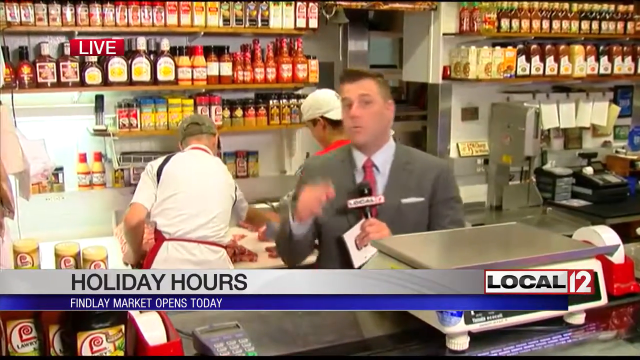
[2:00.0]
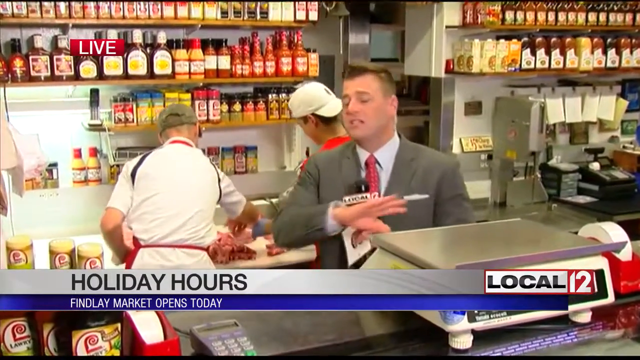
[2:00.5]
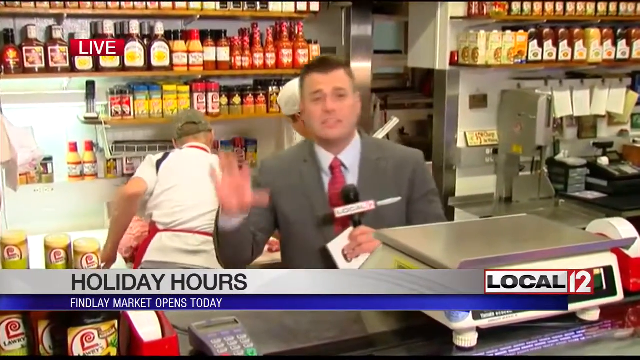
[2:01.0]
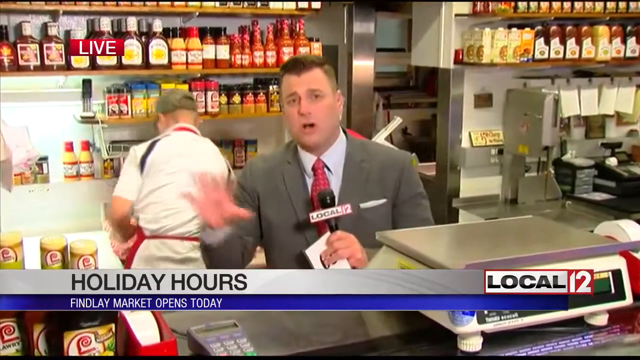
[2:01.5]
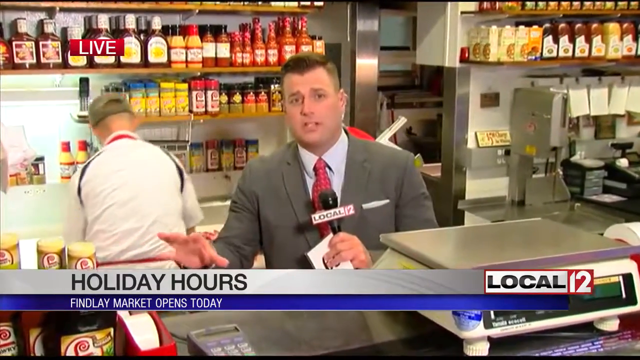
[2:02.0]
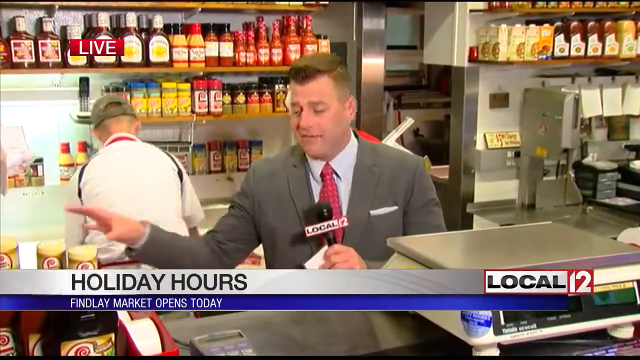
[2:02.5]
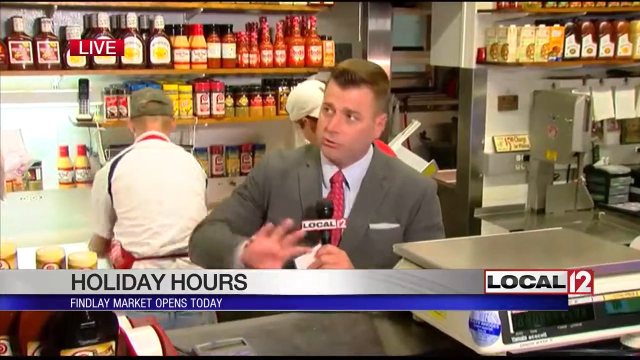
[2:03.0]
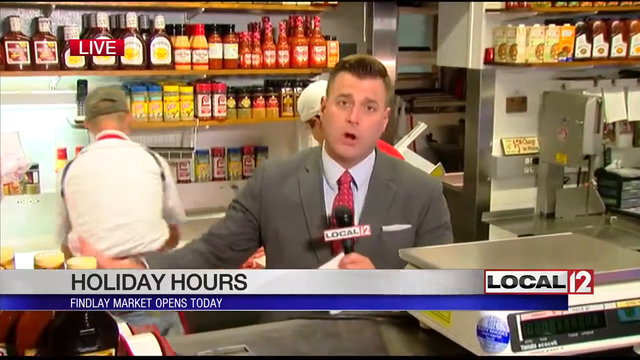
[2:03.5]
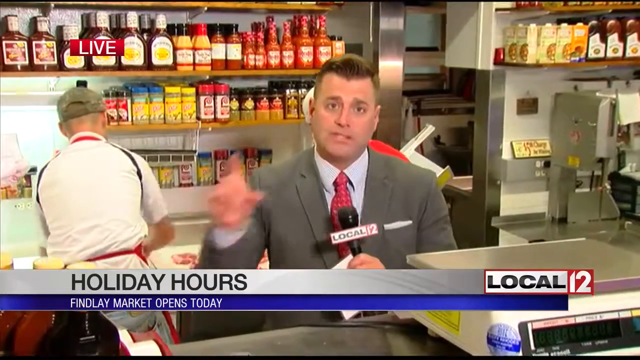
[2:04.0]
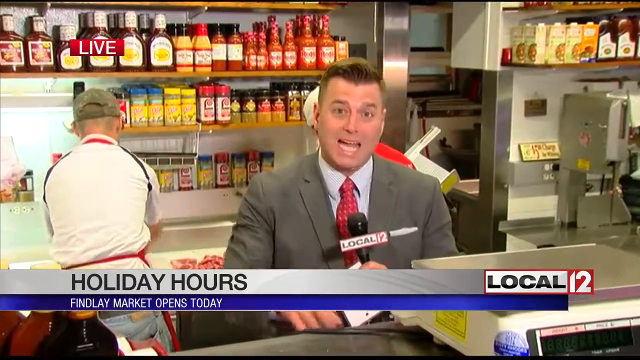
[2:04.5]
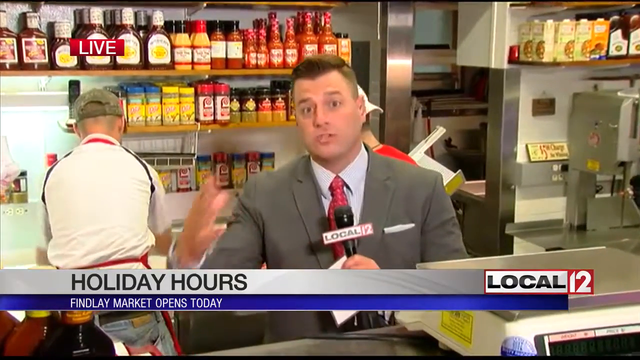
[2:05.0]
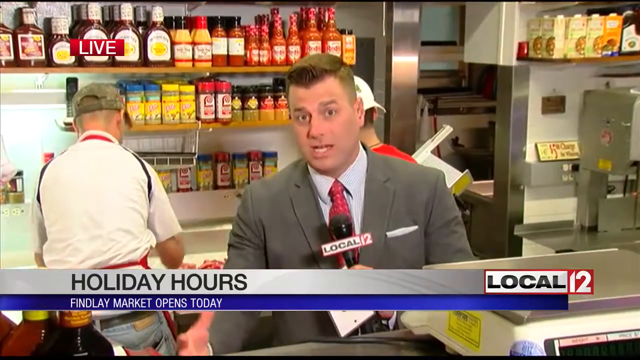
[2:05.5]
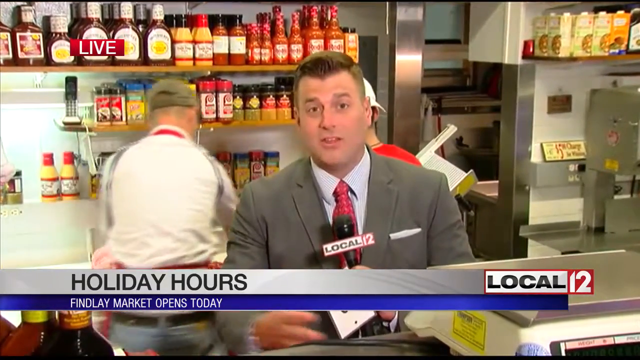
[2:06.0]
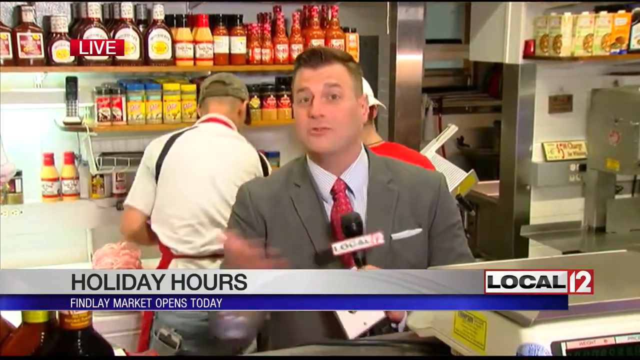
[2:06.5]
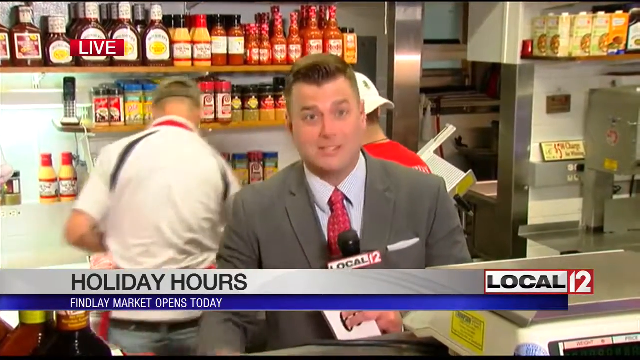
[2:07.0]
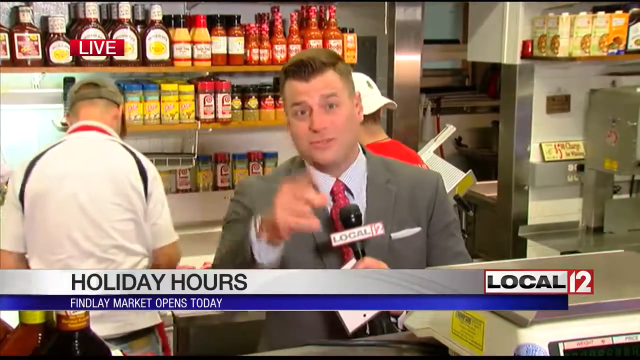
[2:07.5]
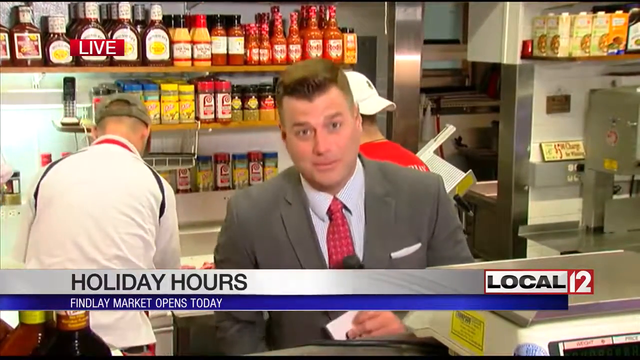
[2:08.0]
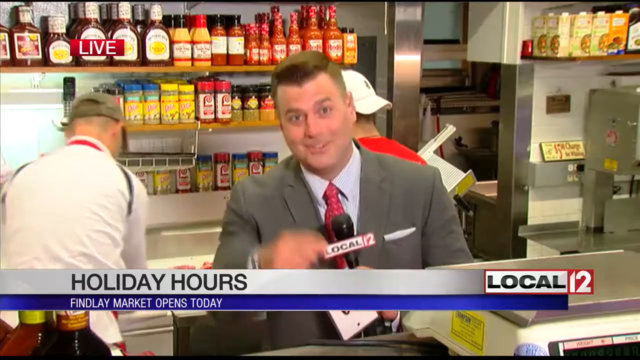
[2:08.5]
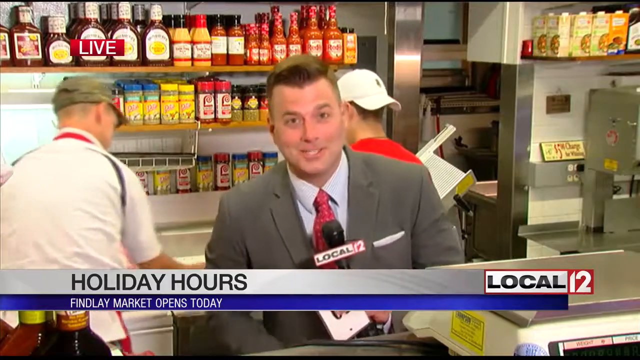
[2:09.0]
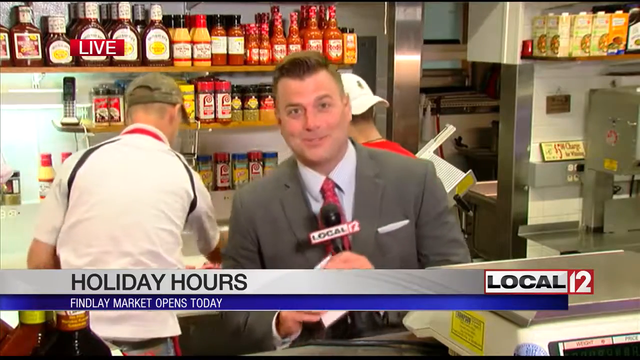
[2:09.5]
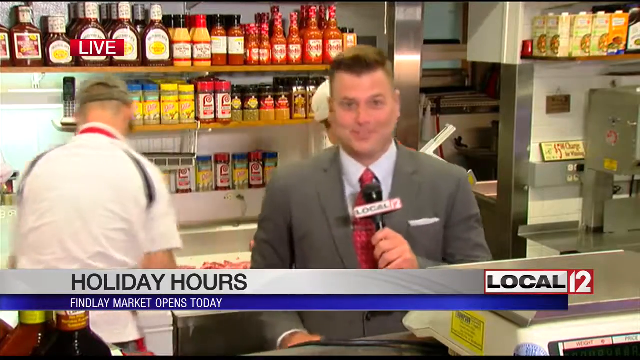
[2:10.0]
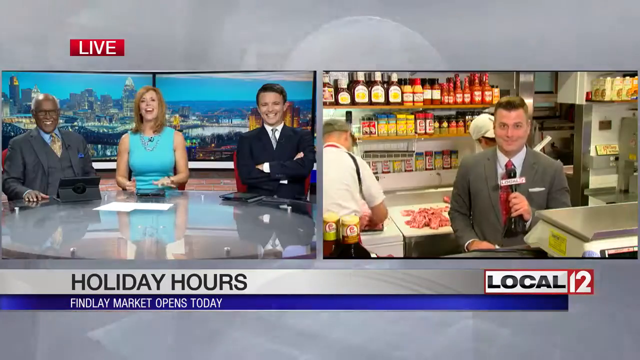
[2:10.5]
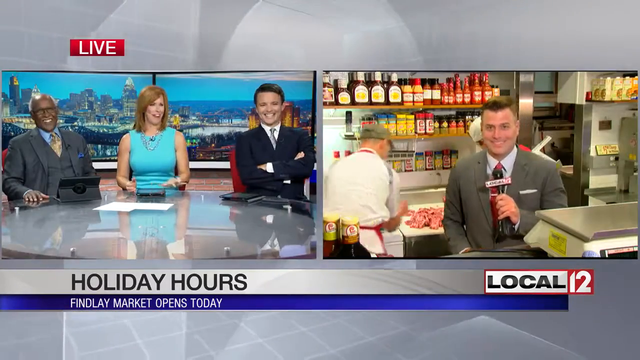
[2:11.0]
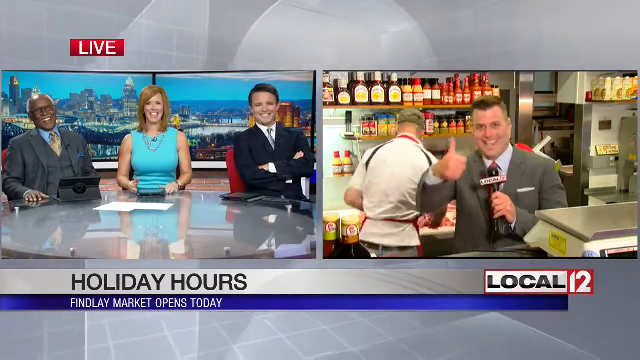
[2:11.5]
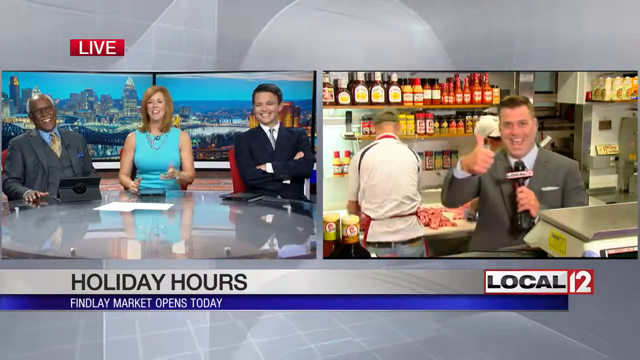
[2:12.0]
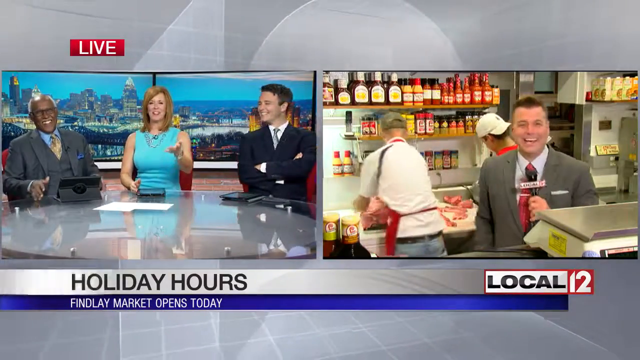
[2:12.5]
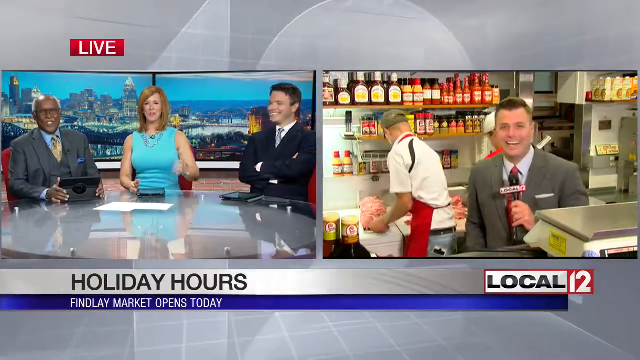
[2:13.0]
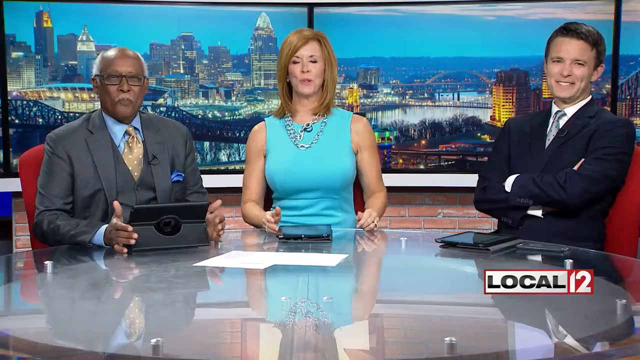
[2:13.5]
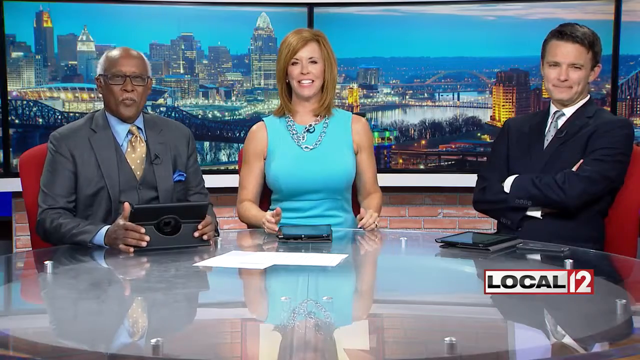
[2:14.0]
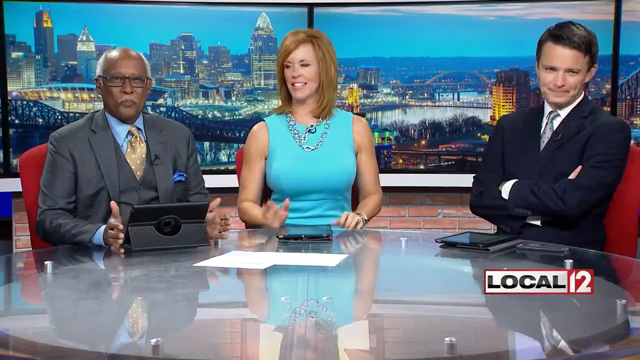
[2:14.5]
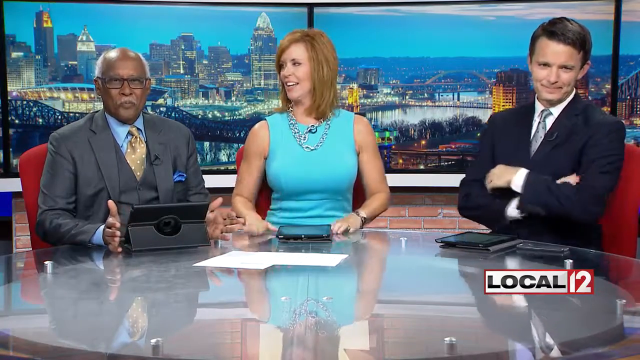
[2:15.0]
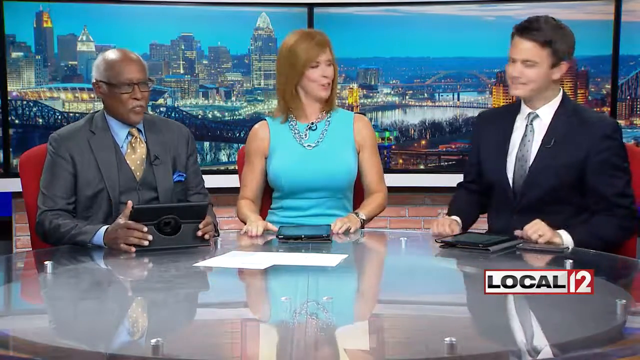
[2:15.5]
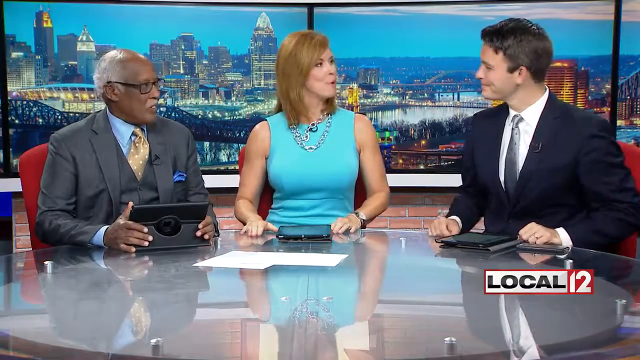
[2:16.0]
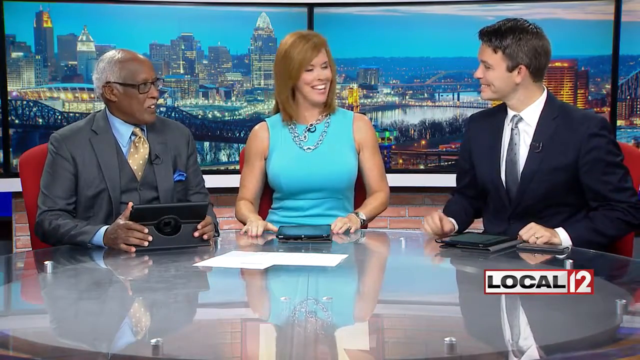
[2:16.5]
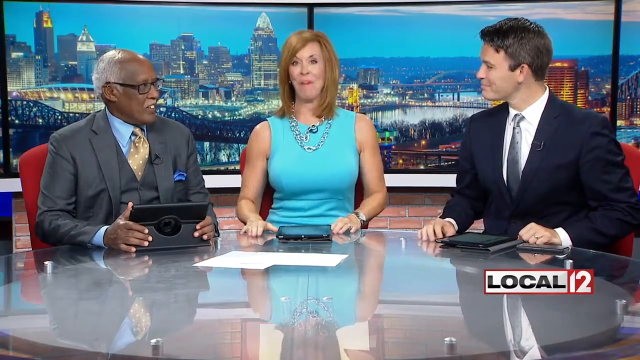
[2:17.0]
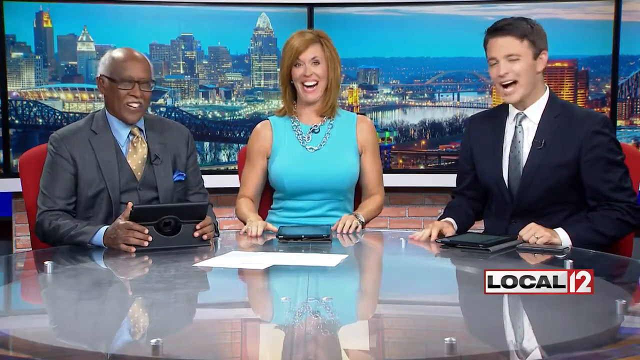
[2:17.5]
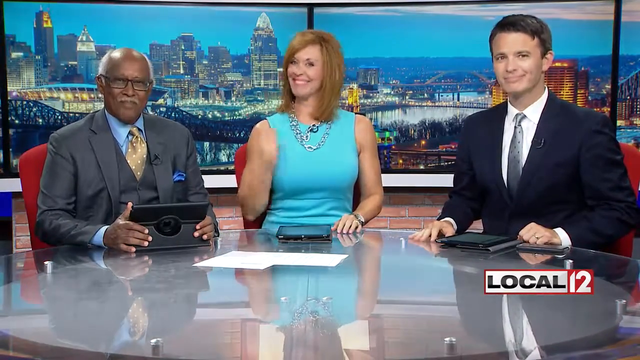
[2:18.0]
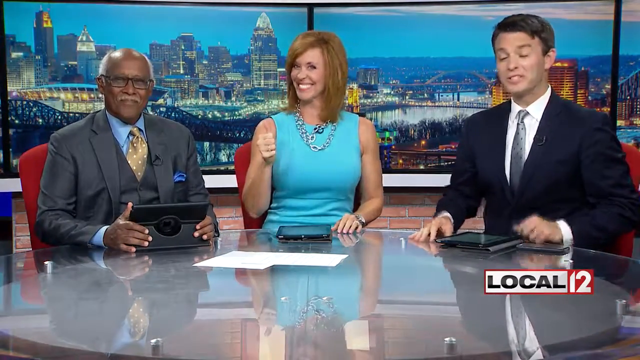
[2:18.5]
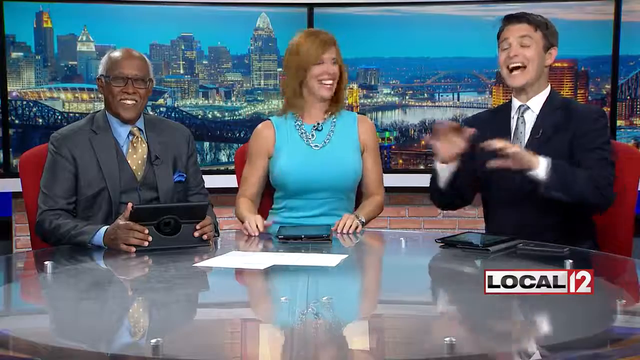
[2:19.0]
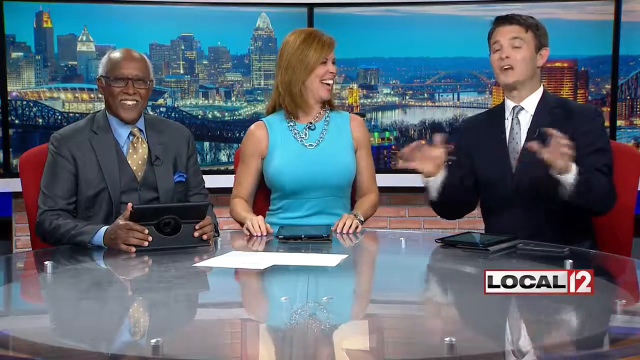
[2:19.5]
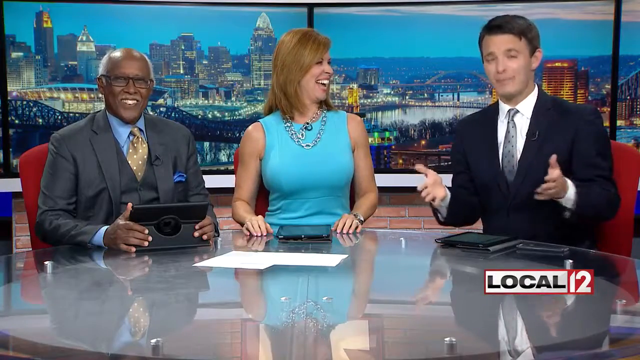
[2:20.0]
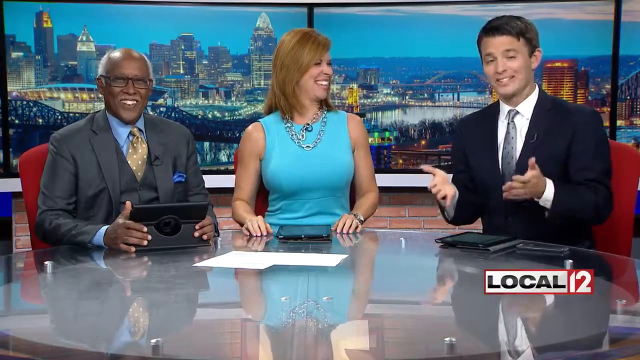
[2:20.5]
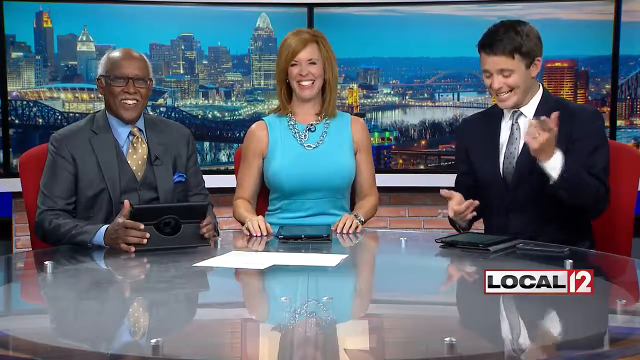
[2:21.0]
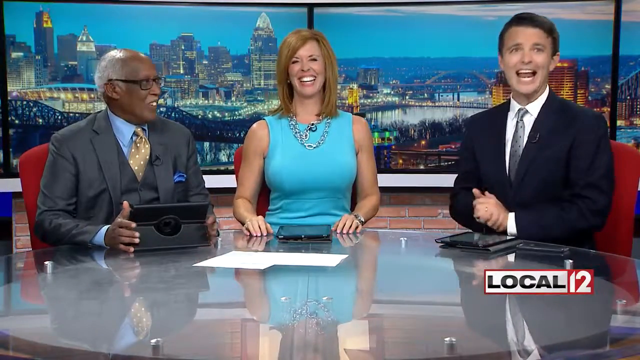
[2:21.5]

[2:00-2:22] The news anchor speaks while looking directly at the camera, moving his hand horizontally from left to right, then up and down, then side to side, and in many other ways as he talks. He speaks excitedly, looks like he has a lot of energy, and smiles with his eyebrows raised. He points at the camera. The shot then shows three other news anchors at the studio on the left and the anchor at the deli on the right. At the studio table, on the left is an elderly African-American man who is smiling, wears glasses, is balding, and wears a gray suit with a light blue shirt and a yellow-gold tie. In the middle is the female anchor in the turquoise dress, and on the right is a young Caucasian man smiling with his arms crossed. The woman in the middle does most of the talking. The camera then focuses only on the studio anchors. She puts her hands on the table, looks at the men sitting on either side of her, then looks back at the camera smiling while speaking and gives a thumbs up with her right hand. The young man, on the viewer's right, continues speaking and moves his hands around.